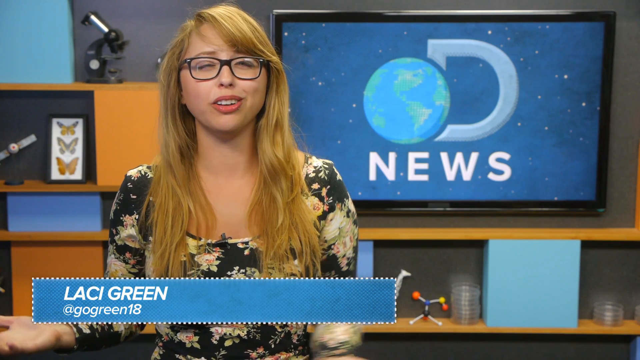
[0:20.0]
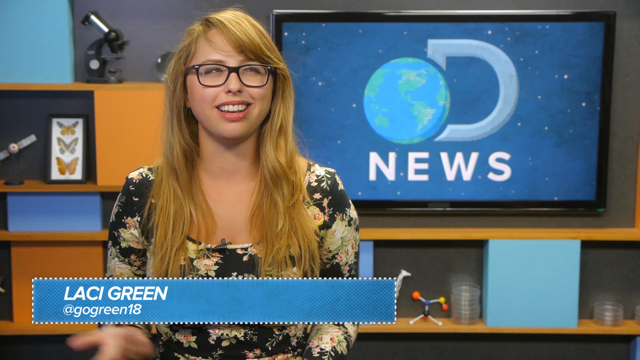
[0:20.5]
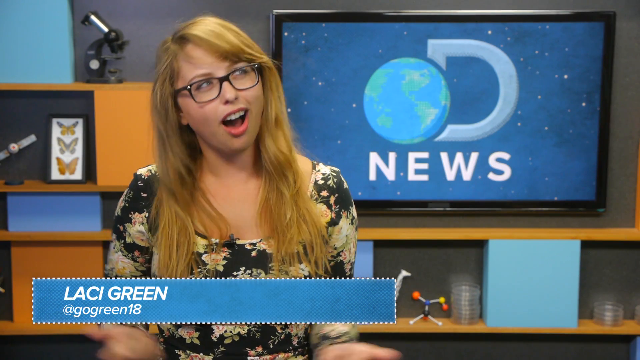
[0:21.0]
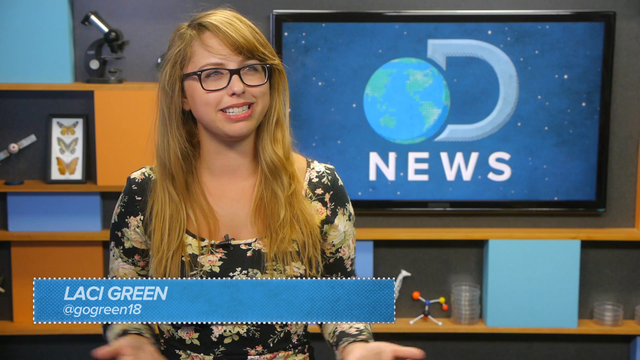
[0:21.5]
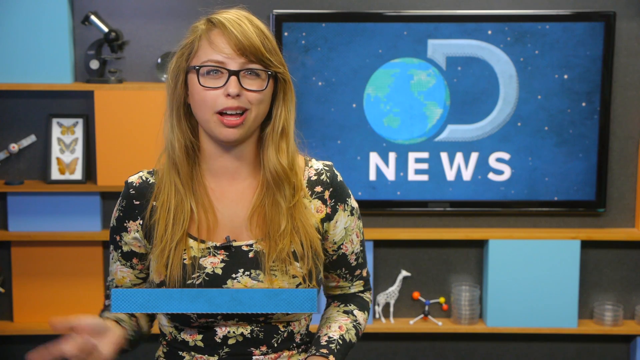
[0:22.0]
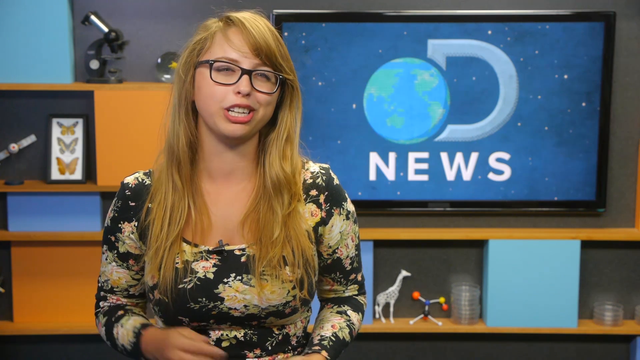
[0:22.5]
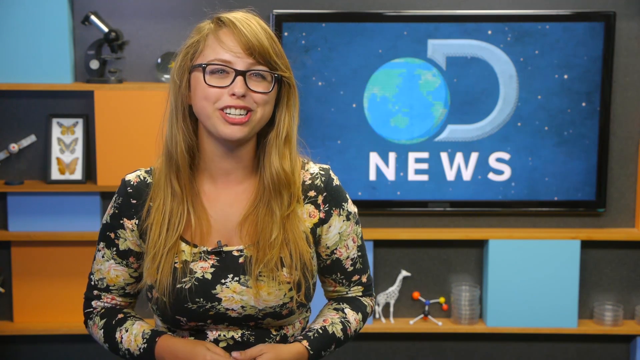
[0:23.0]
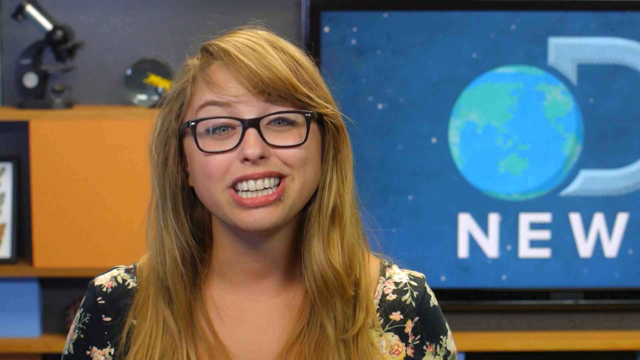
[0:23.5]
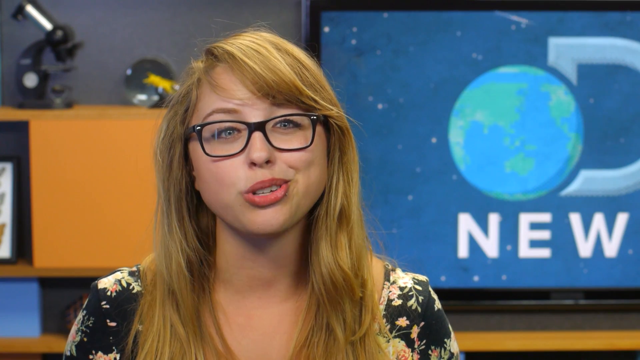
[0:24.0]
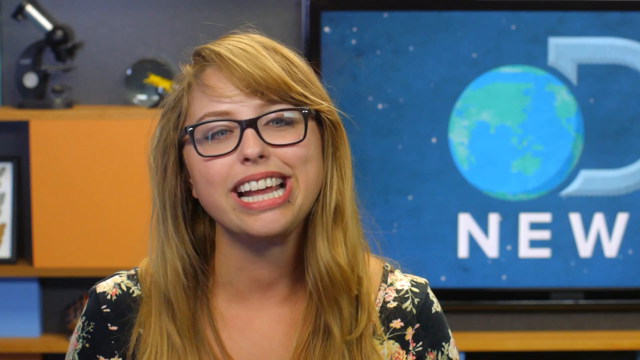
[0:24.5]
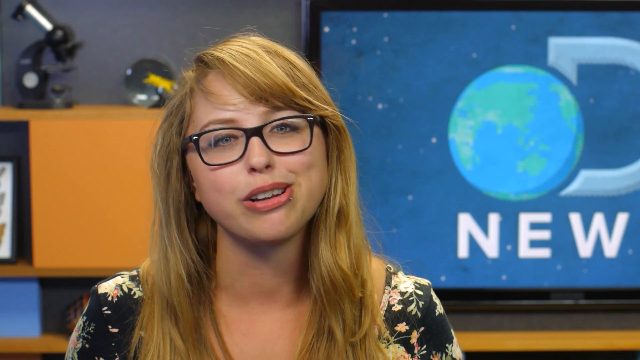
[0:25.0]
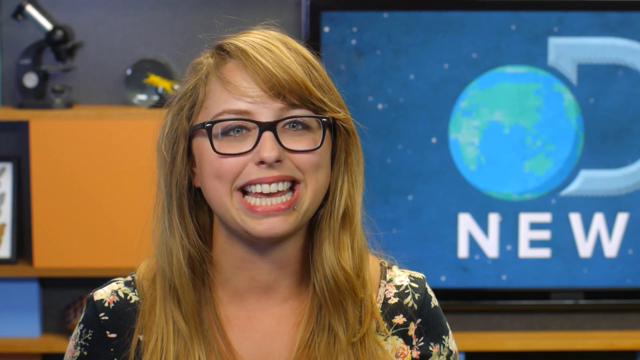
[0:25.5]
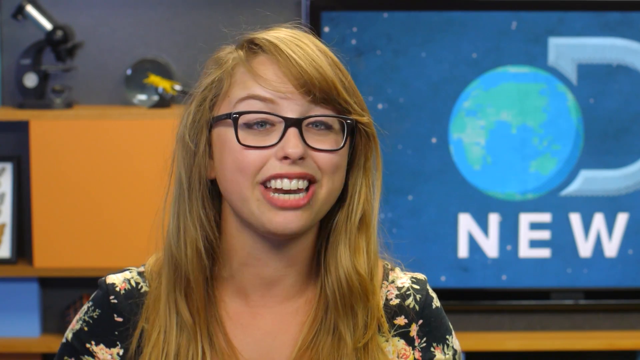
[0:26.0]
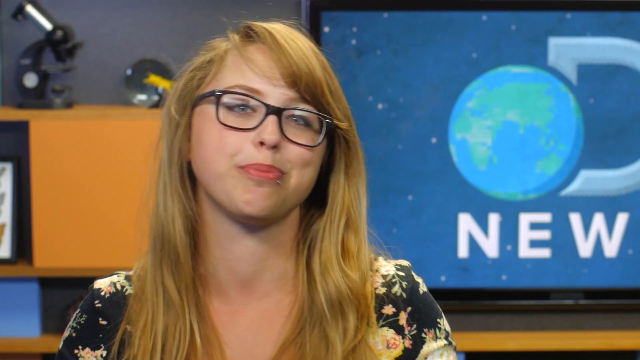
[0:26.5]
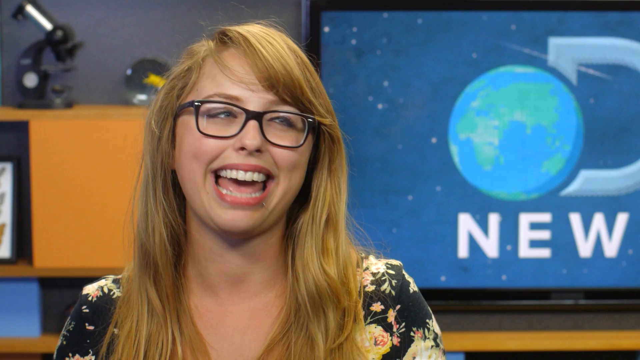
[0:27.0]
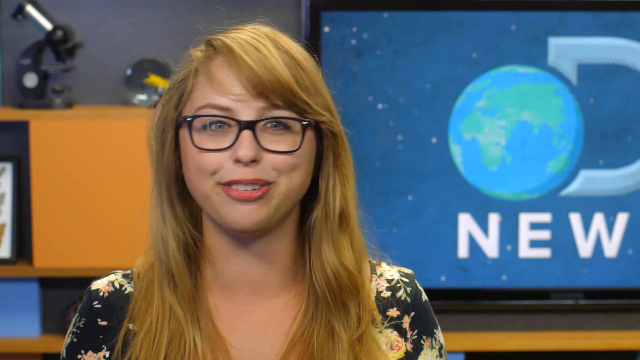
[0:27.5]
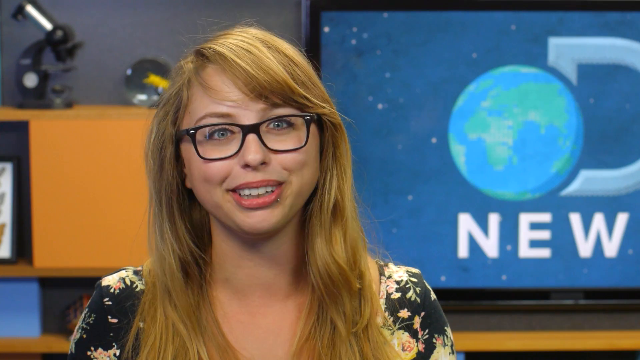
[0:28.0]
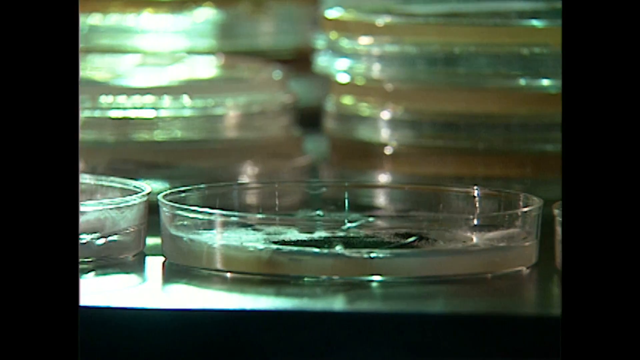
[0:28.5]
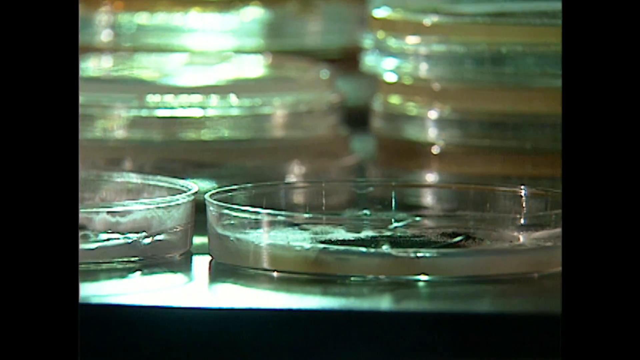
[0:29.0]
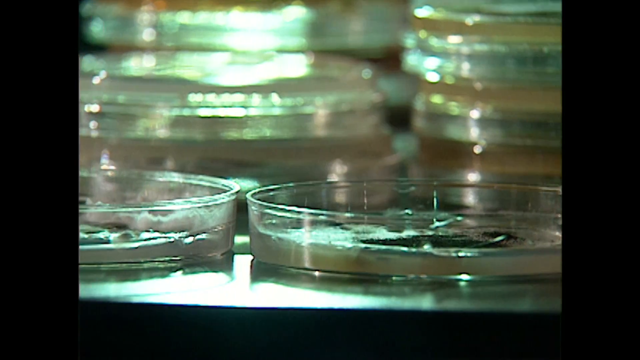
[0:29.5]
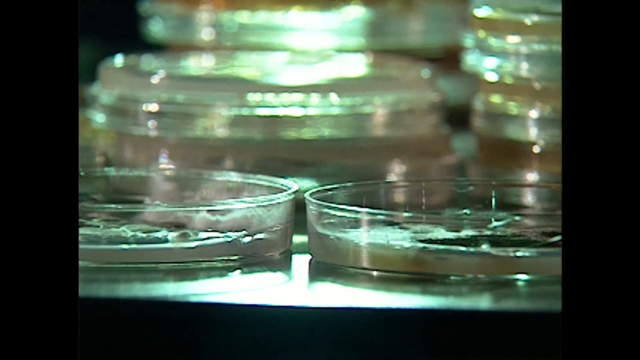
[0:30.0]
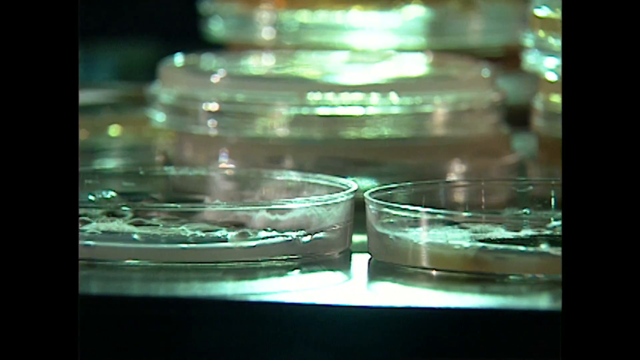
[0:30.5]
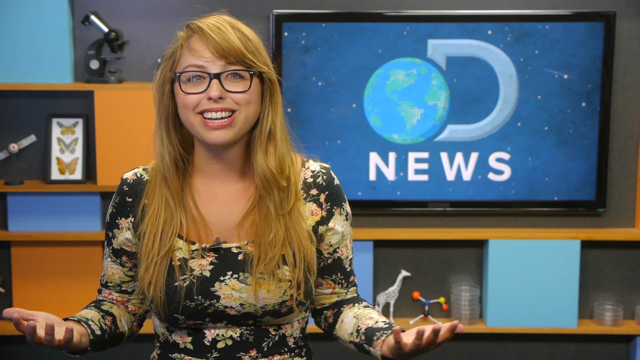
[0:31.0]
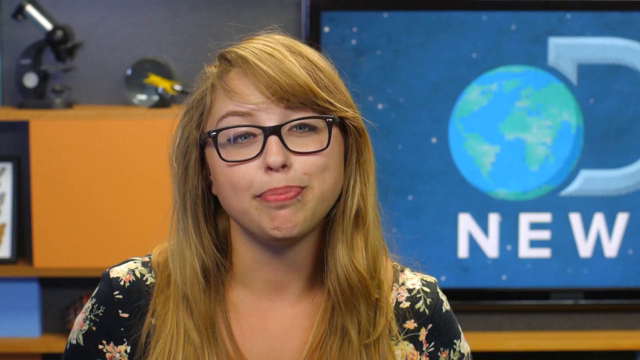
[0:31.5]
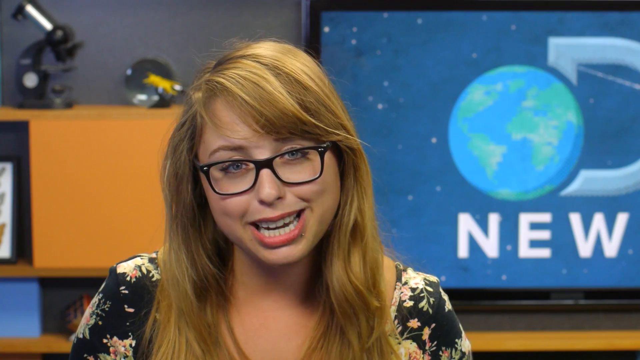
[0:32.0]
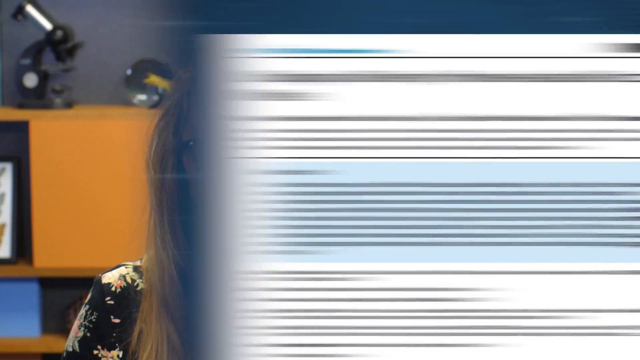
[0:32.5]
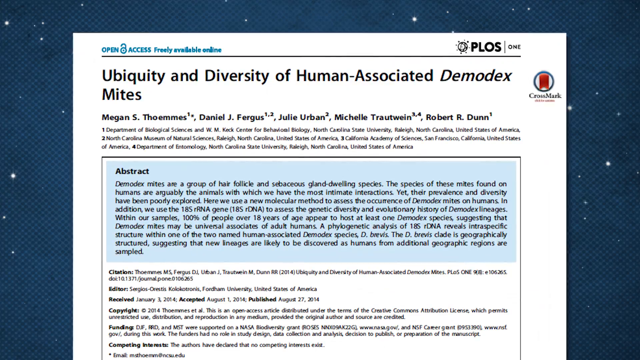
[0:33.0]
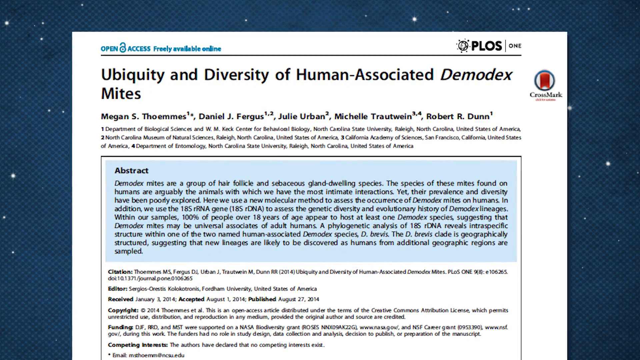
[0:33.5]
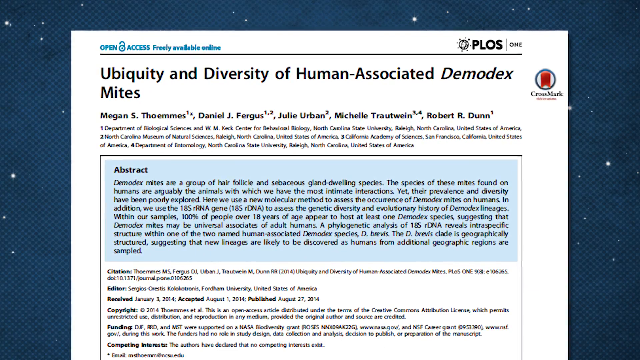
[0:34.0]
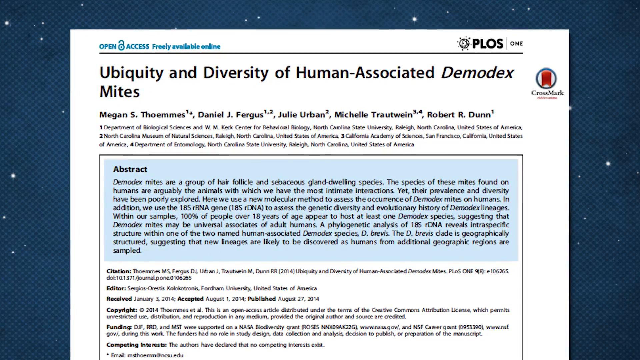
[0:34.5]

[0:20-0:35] The woman newscaster, Laci Green, reports the news in a way that seems almost not serious, gesturing with her hands as she speaks. She wears dark-framed glasses, apparently brown, light makeup with just a lip tint, and a dip-neck blouse. Her long reddish blonde hair reaches down to her chest. A large screen in the back shows a large capital letter D, a globe, and the word news underneath. There are some tan wood-colored cabinets or drawers and shelving in the back. The screen then changes to what appear to be Petri dishes with an unidentified liquid substance in them that looks viscous or thick. Then a piece of paper with a lot of text on it comes across; it appears to be news as well. The newscaster is animated, with wide eyes, lots of smiles and lots of hand gestures.